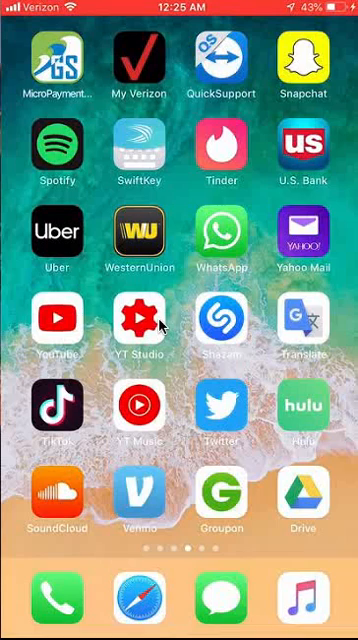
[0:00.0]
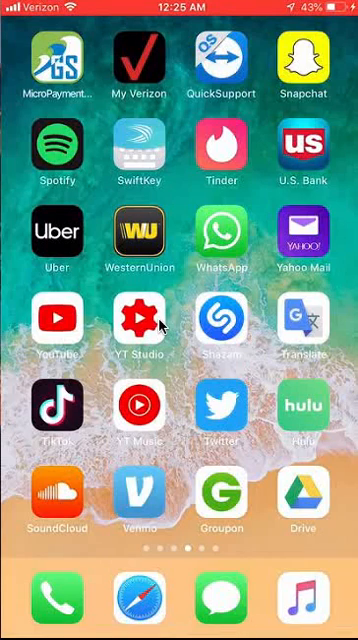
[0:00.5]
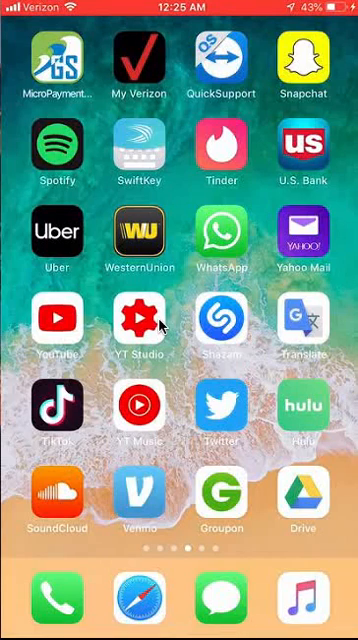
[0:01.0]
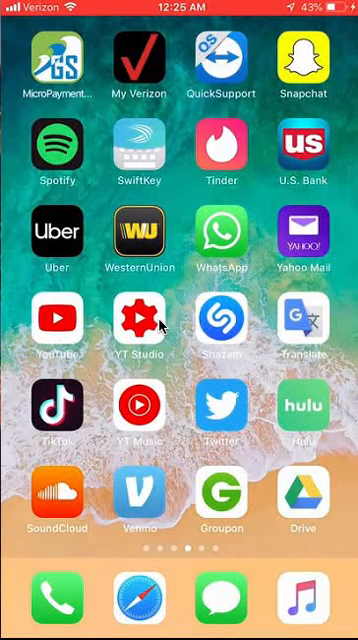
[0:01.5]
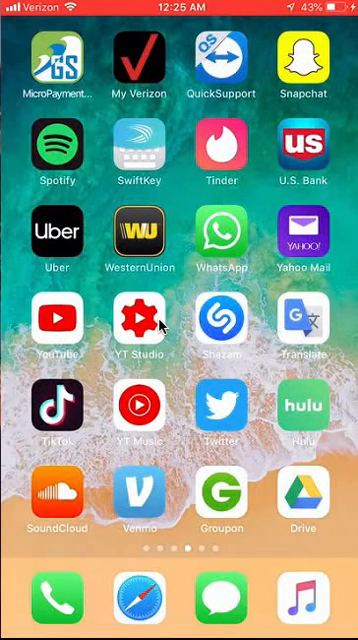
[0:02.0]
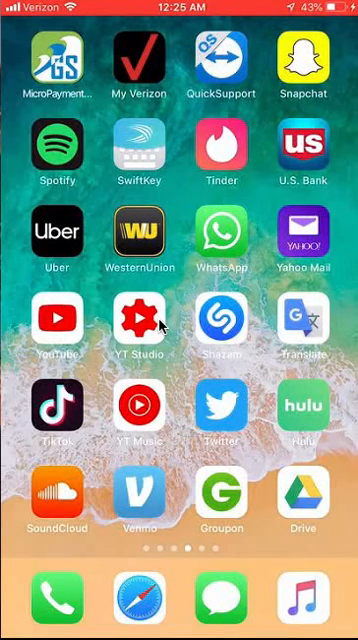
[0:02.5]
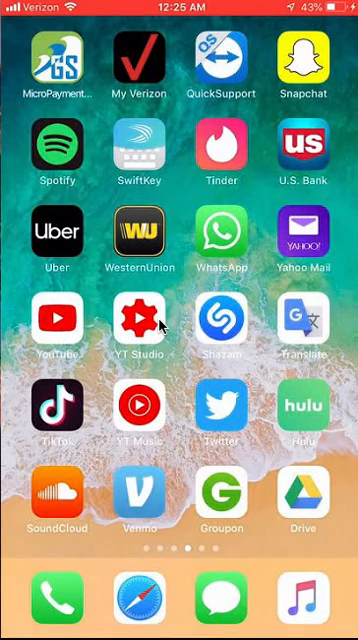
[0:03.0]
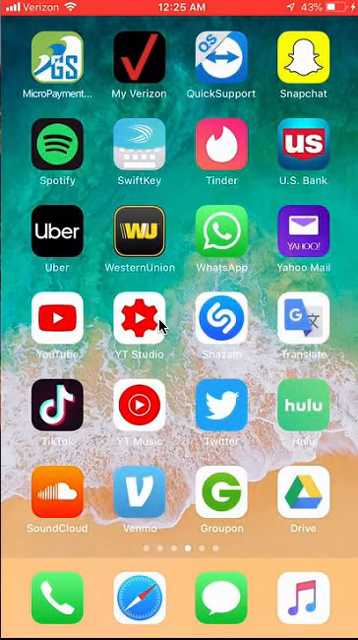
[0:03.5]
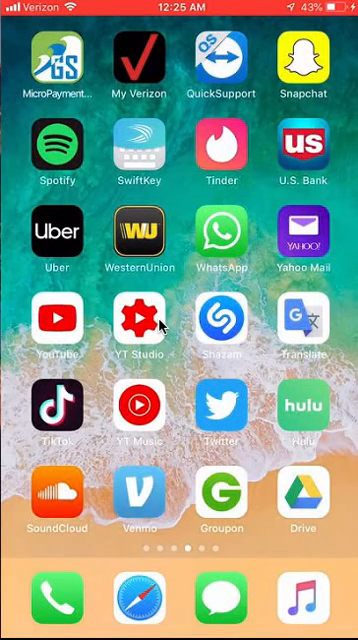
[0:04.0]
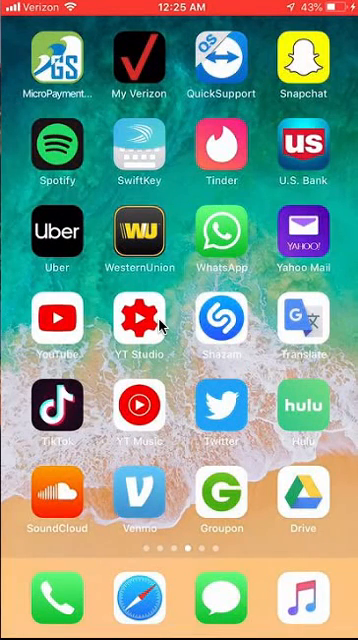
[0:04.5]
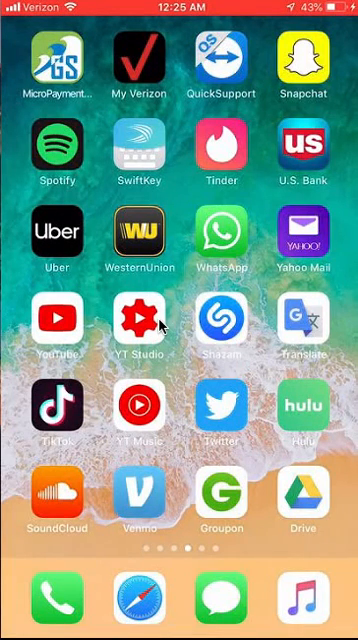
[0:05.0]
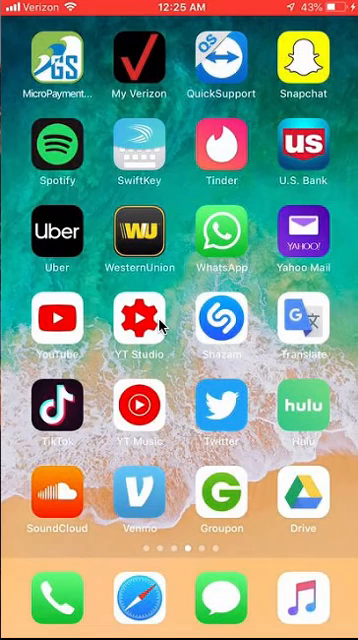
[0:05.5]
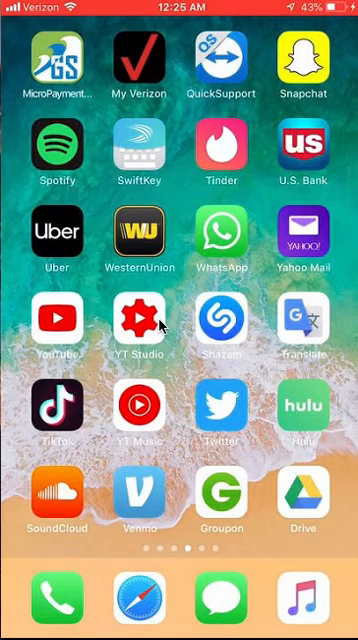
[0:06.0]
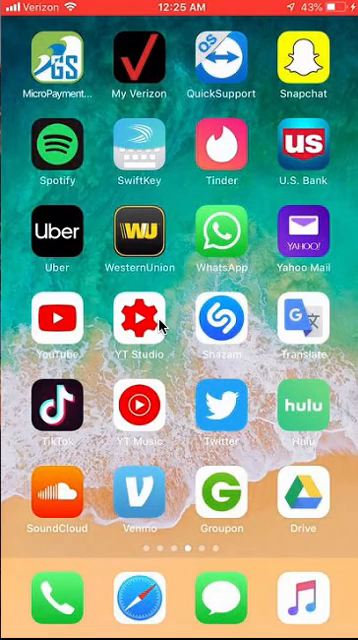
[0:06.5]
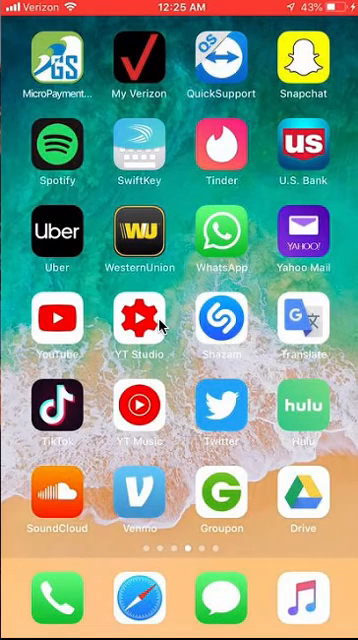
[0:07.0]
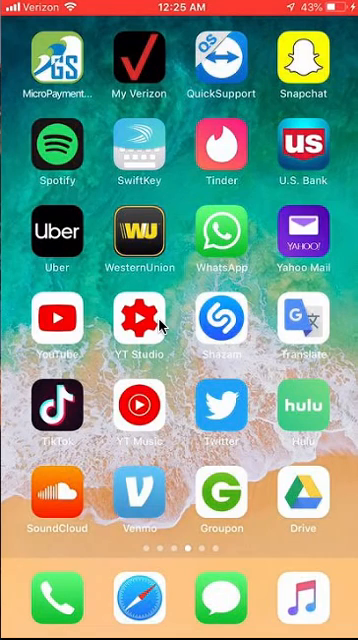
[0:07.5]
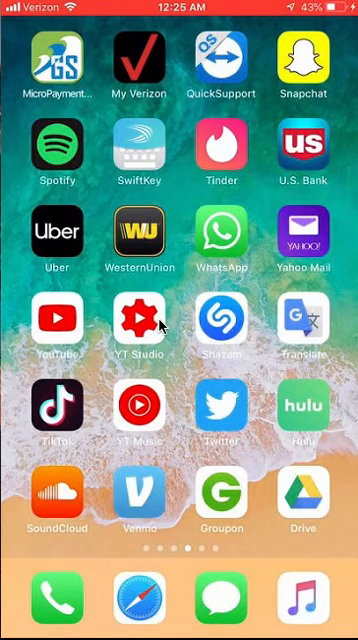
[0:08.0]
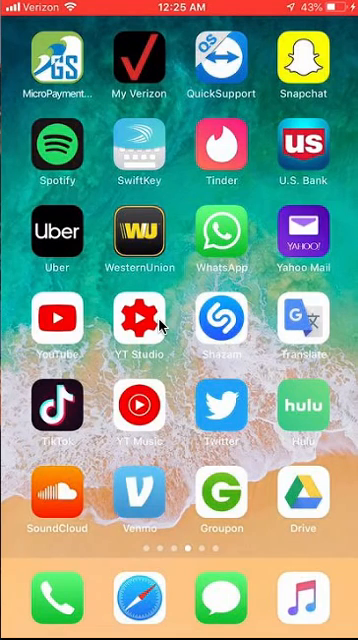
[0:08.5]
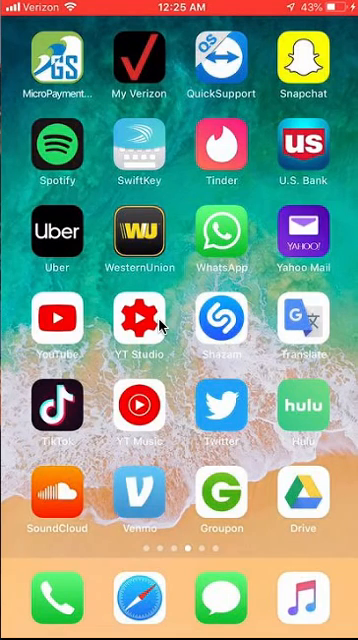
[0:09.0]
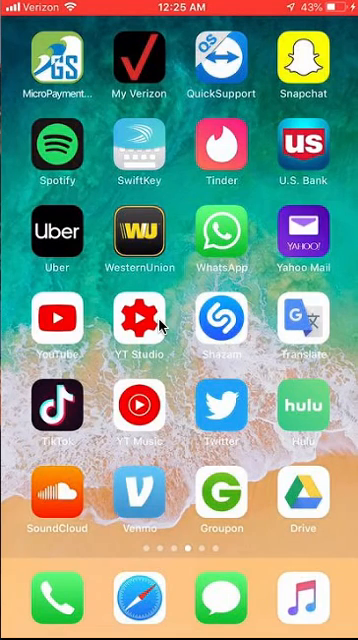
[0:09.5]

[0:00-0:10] The video shows screen sharing of an iPhone, or what looks to be an iPhone screen, on the home screen, which displays the apps on the phone. Among them are My Verizon, Micropayment, Quicksupport, Snapchat, Spotify, SwiftKey, Tinder, U.S. Bank, Uber, Western Union, WhatsApp, Yahoo, Mail, YouTube, Y-Tag, T-Studio, Shazam, Google Translate, TikTok, YT Music, Twitter, Hulu, SoundCloud, Unmute, Groupon, Drive, Phone, Safari, Messages and iTunes. The top left of the screen shows the Verizon signal, and the top right shows the battery at 43%.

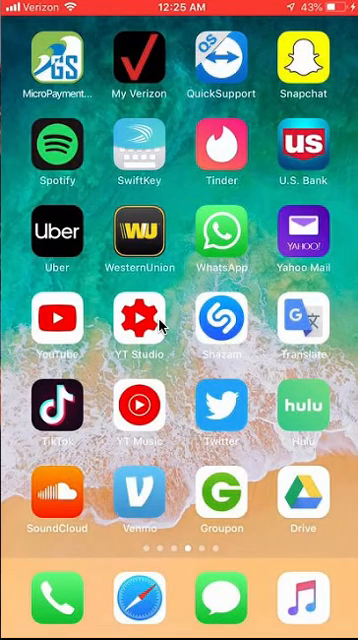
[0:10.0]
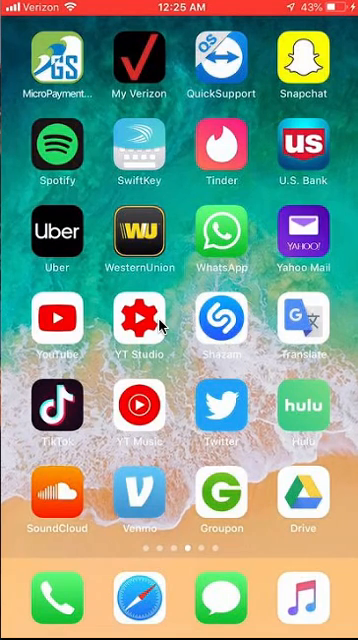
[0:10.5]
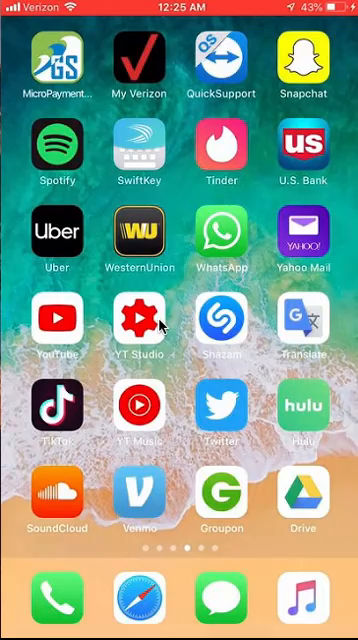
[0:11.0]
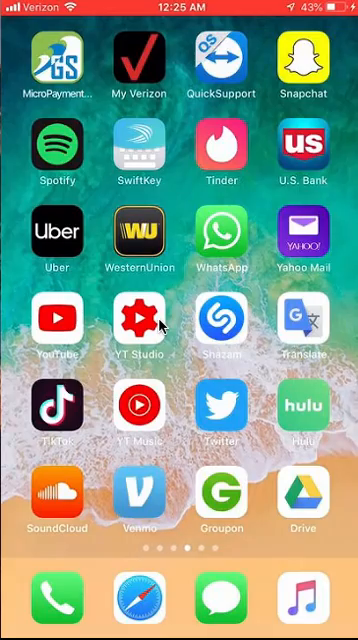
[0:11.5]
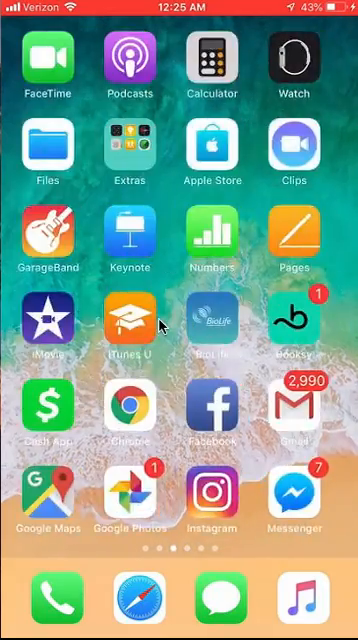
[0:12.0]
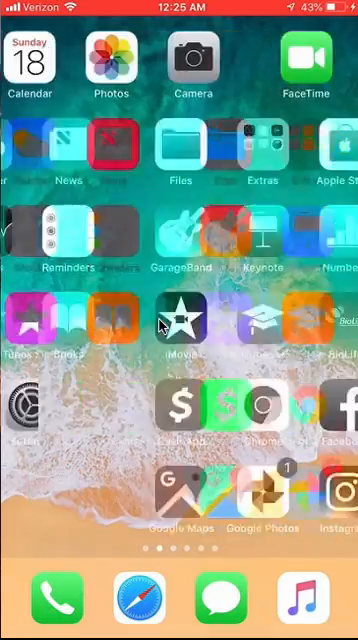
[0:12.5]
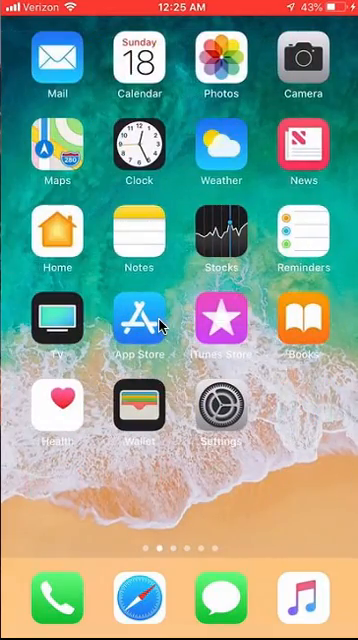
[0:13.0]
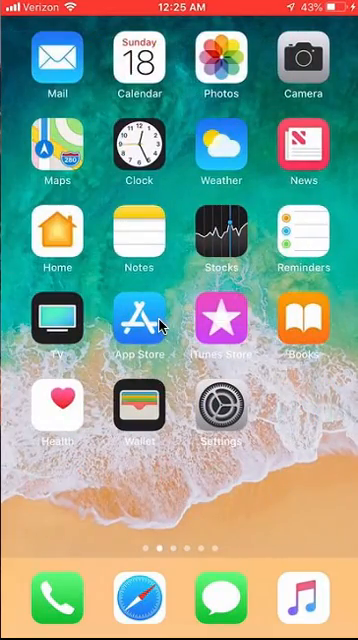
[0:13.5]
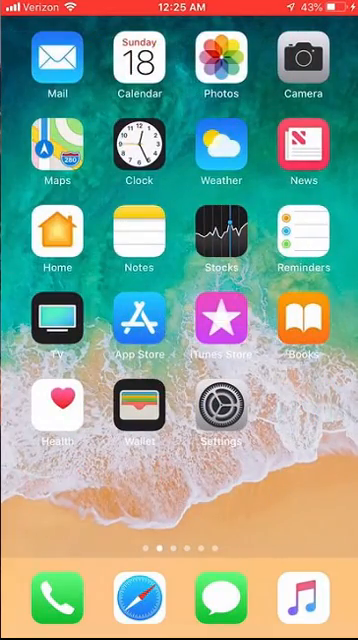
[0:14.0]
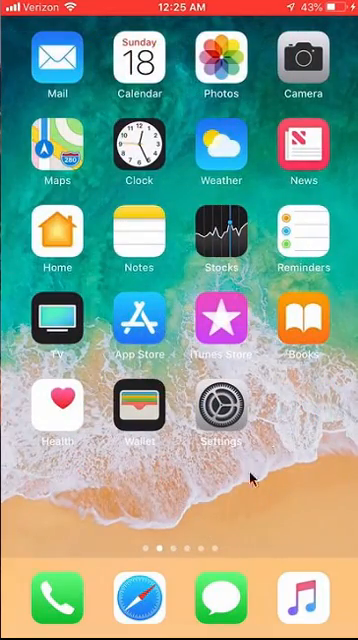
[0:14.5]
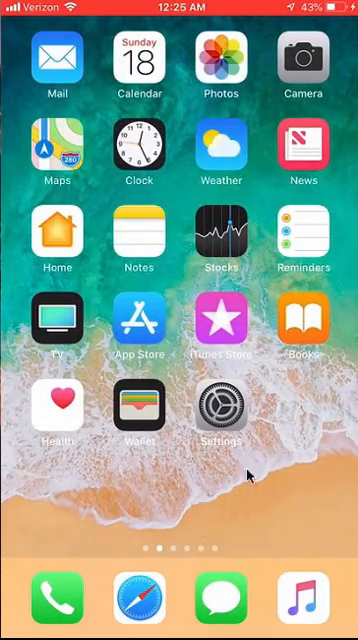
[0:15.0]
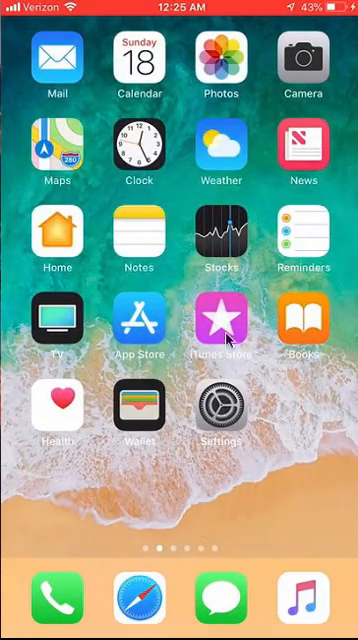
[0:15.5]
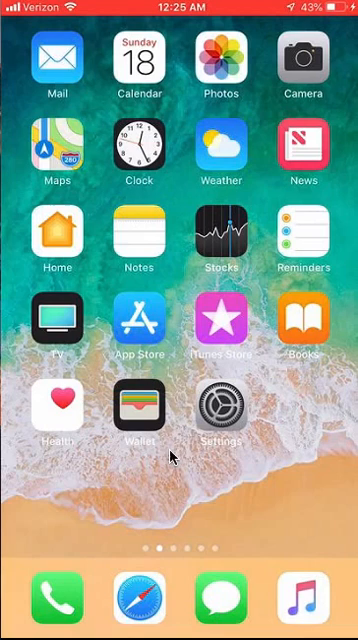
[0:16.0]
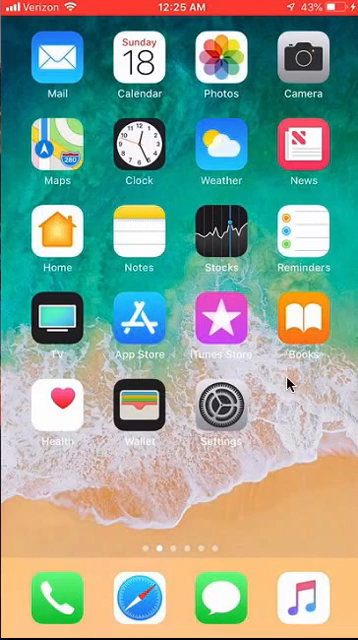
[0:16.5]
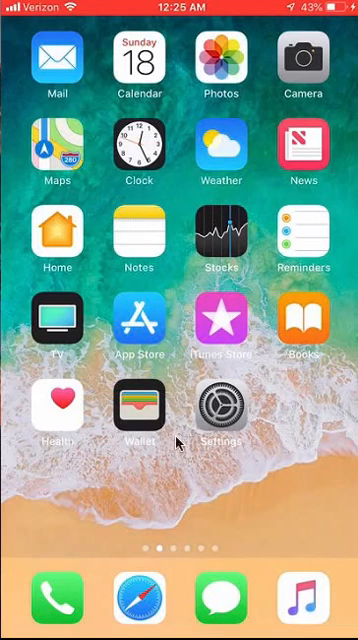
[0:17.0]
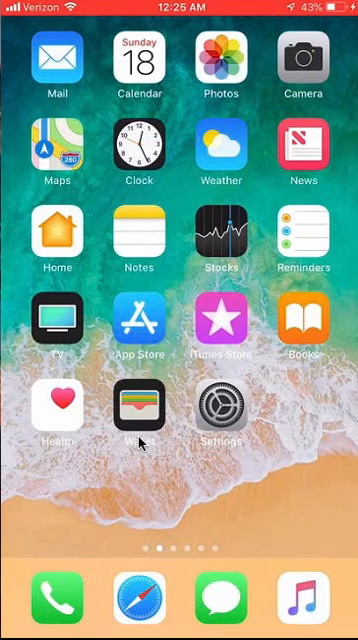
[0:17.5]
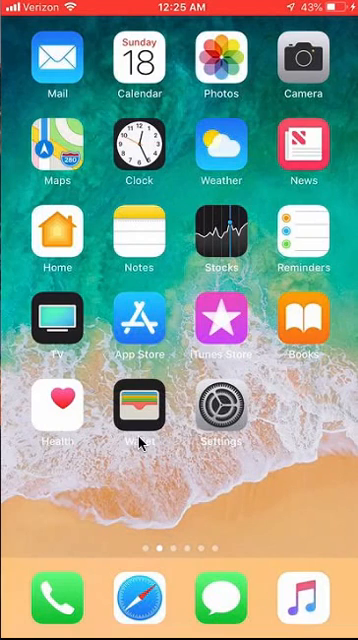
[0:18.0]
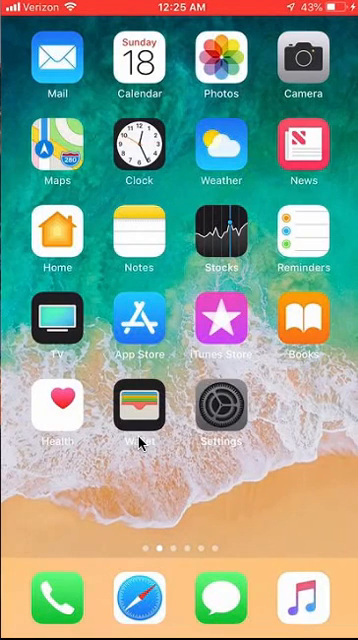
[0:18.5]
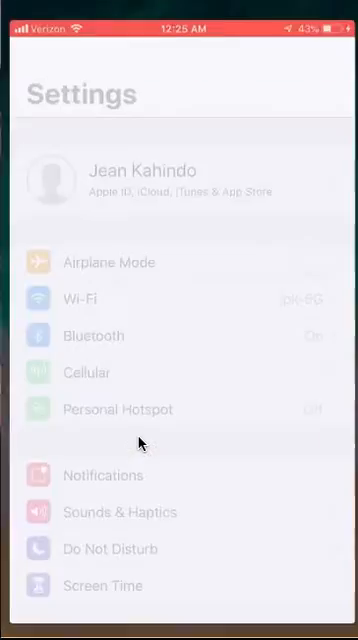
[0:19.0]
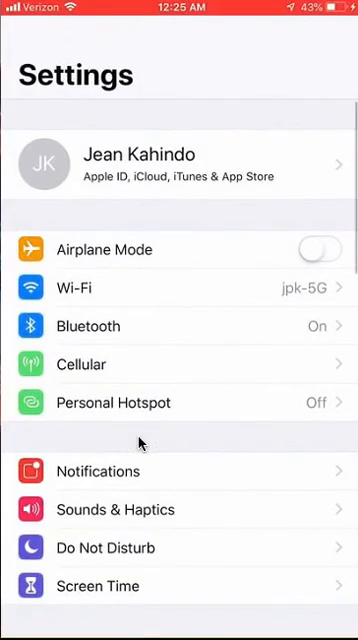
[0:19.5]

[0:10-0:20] The person first changes to another page of the iPhone with different apps on it, including calendar, mail, photos and camera, and then goes into the settings app. At the top of the settings, the name of the person who owns and is using the phone is shown as Jean Cajindo, and below it says Apple ID, iCloud, iTunes, and App Store. Below that are multiple settings: airplane mode, Bluetooth, cellular, personal hotspot, notifications, sound haptics and screen time.